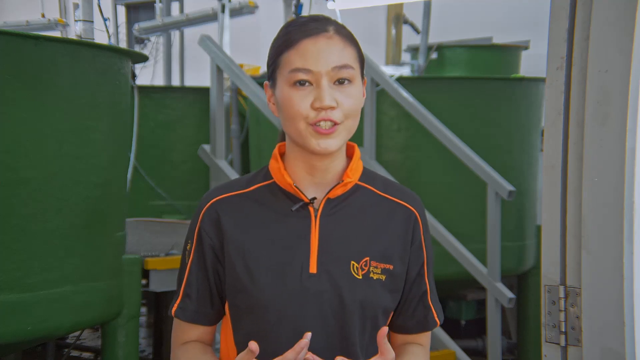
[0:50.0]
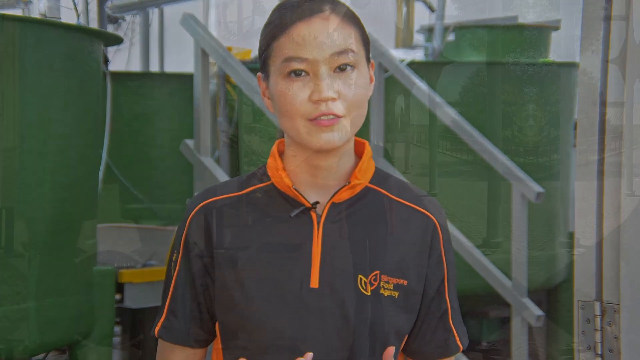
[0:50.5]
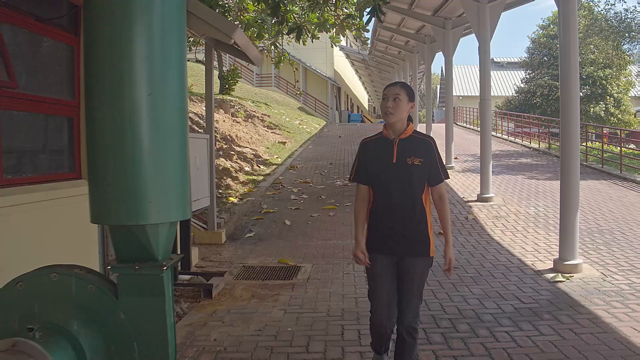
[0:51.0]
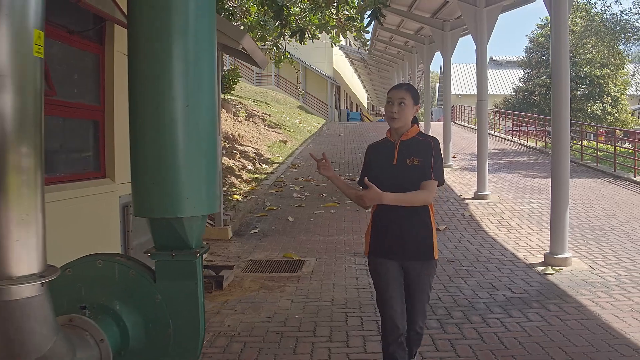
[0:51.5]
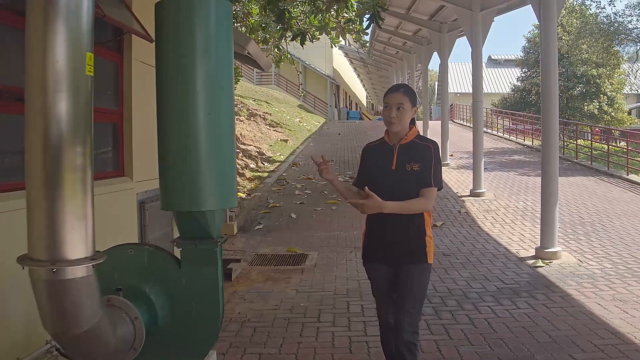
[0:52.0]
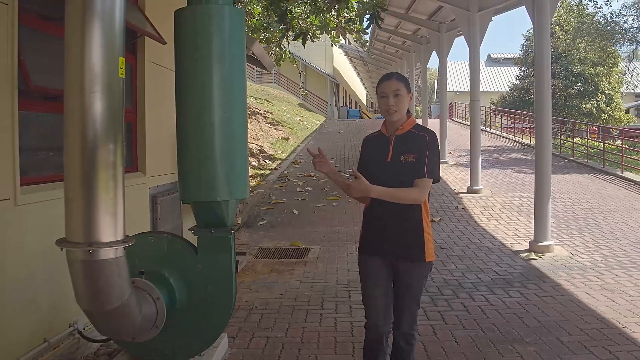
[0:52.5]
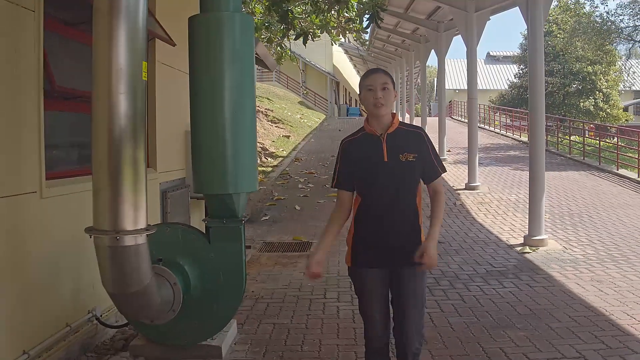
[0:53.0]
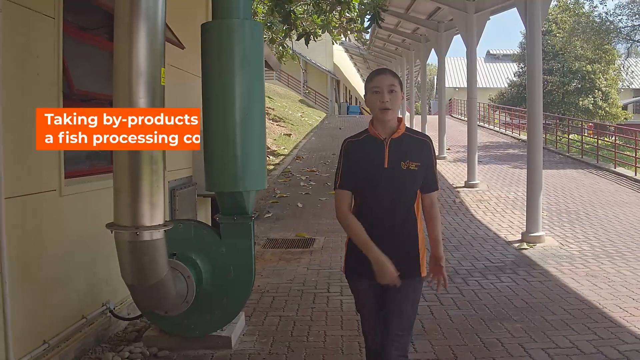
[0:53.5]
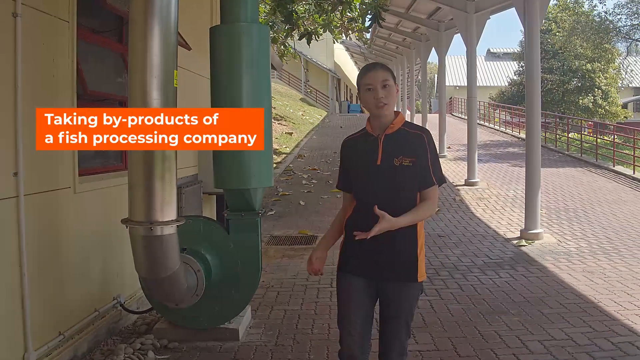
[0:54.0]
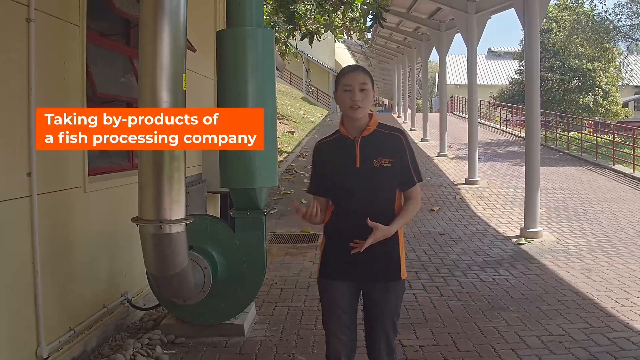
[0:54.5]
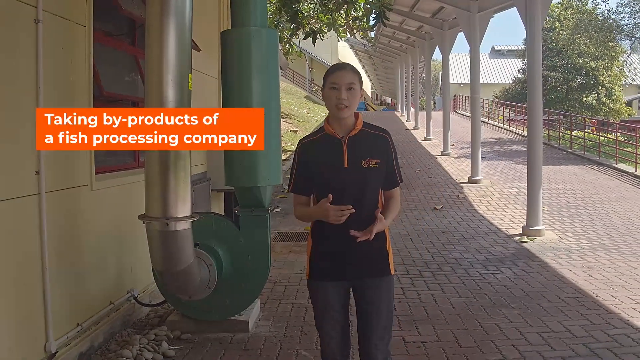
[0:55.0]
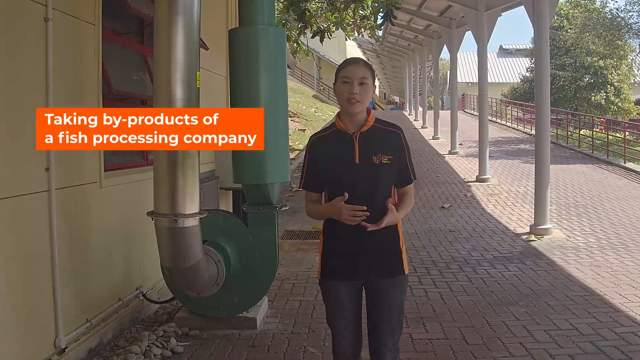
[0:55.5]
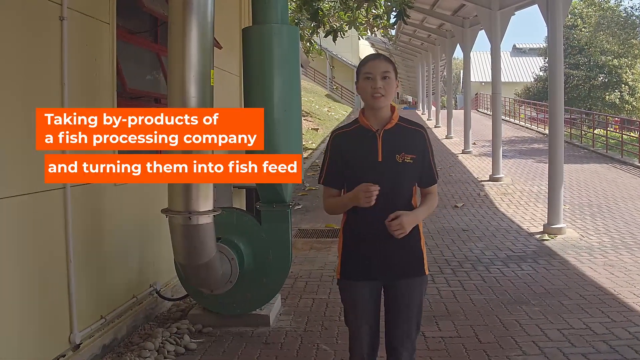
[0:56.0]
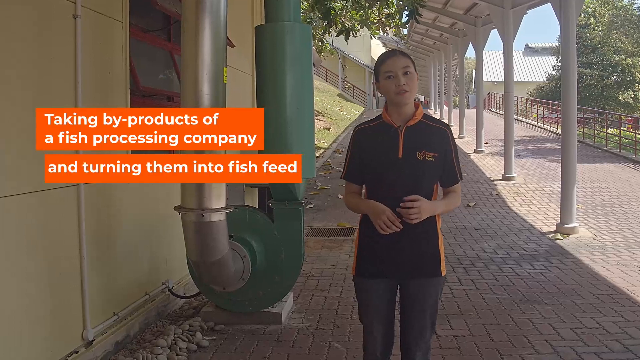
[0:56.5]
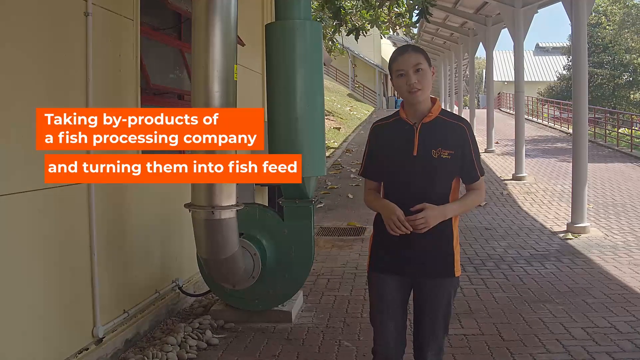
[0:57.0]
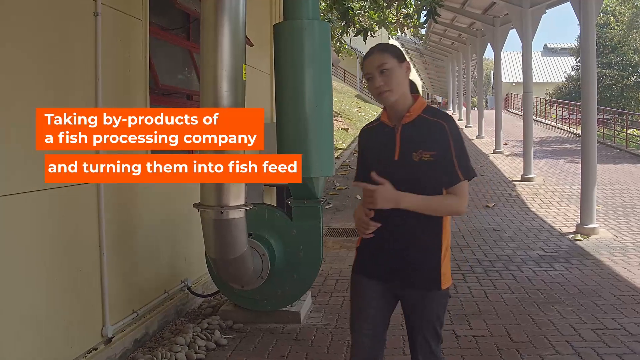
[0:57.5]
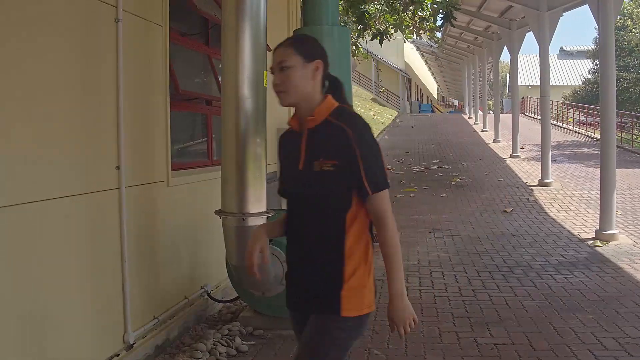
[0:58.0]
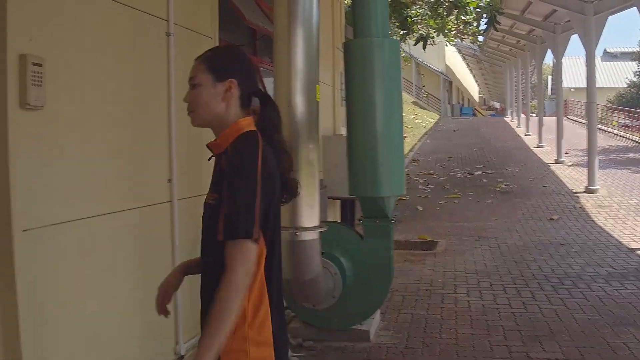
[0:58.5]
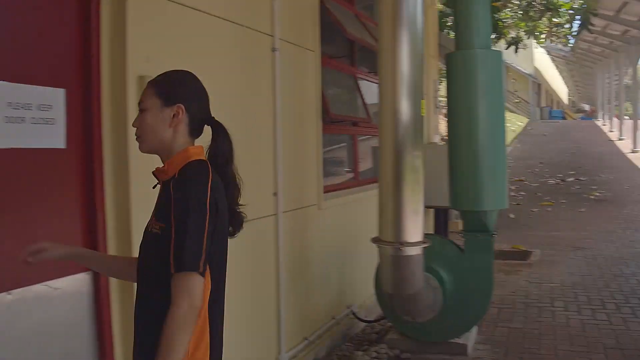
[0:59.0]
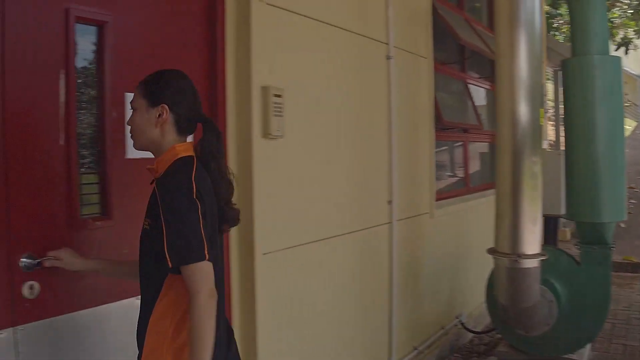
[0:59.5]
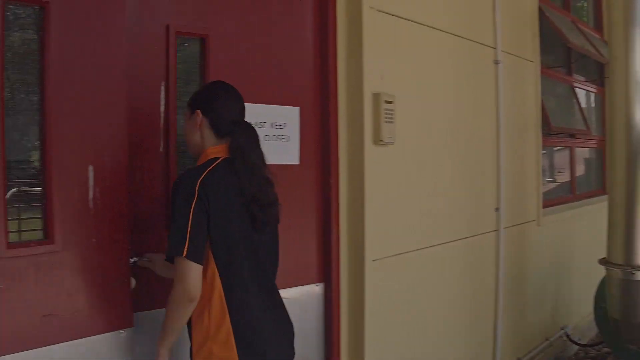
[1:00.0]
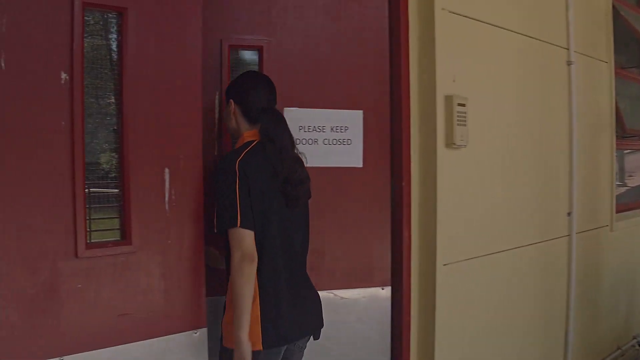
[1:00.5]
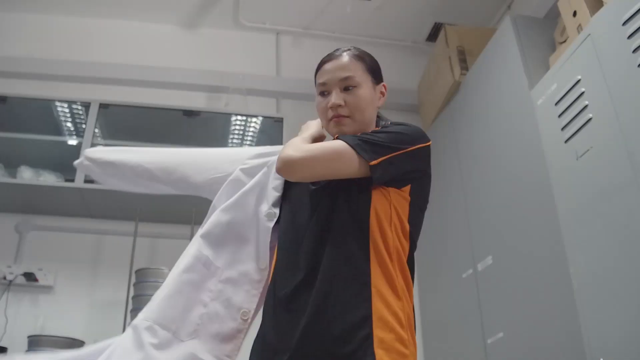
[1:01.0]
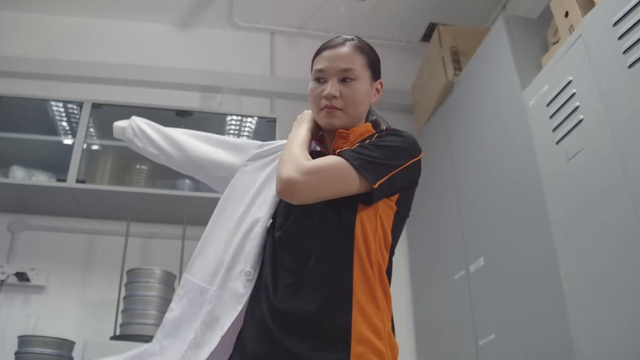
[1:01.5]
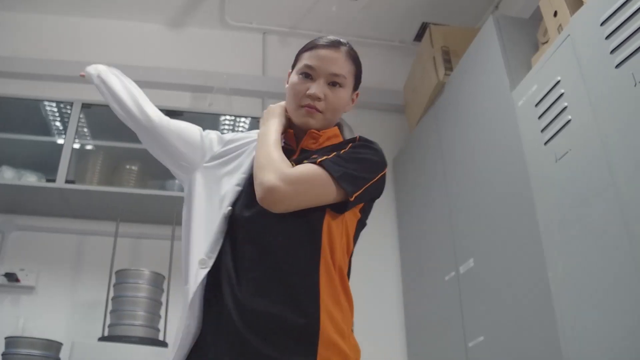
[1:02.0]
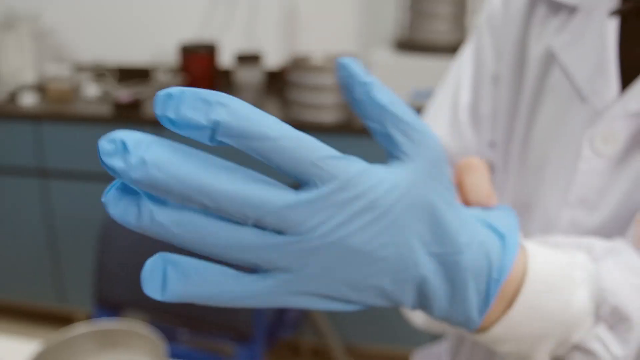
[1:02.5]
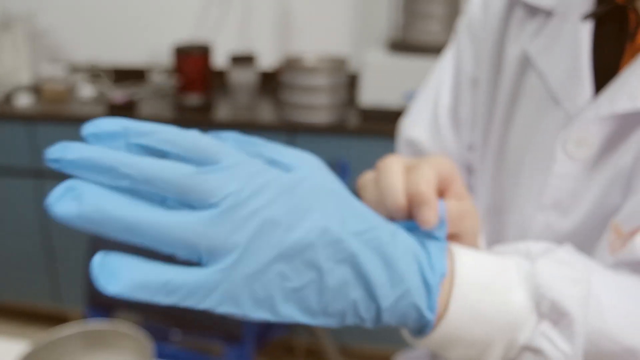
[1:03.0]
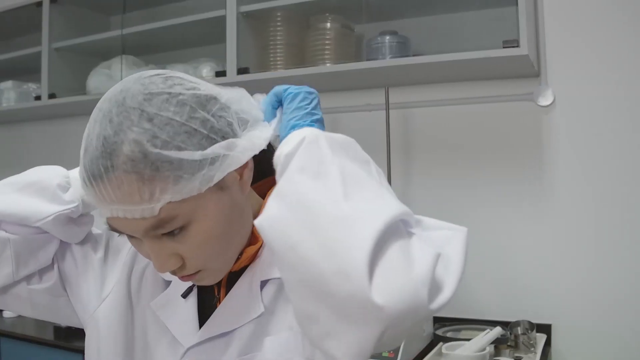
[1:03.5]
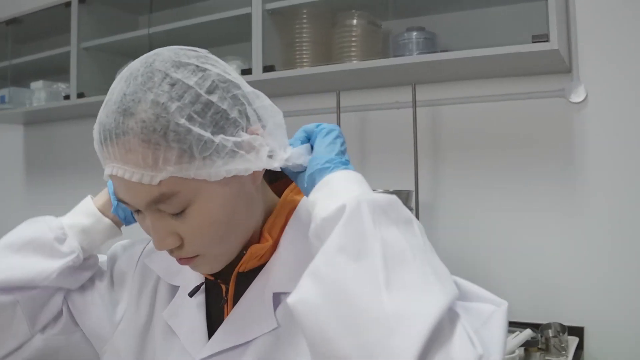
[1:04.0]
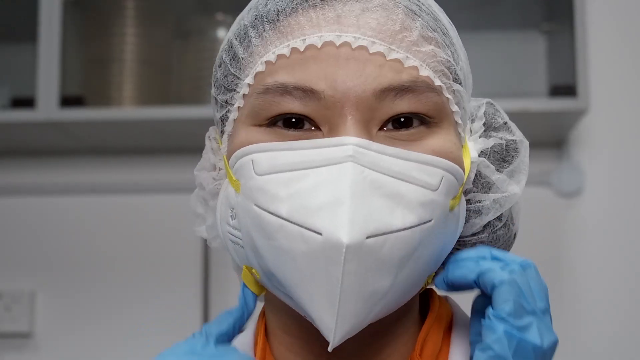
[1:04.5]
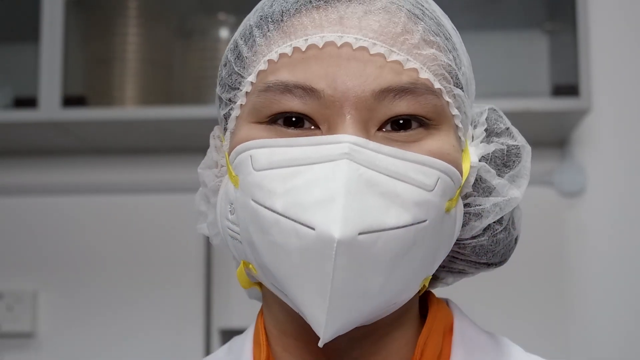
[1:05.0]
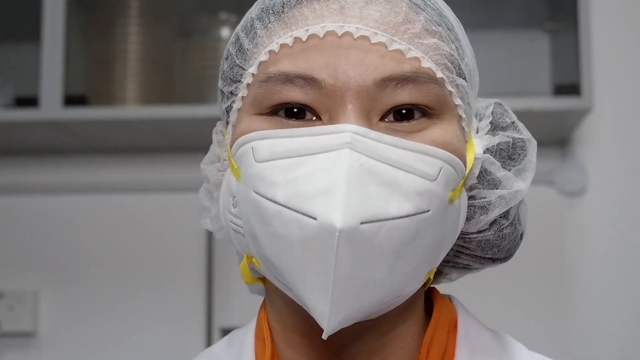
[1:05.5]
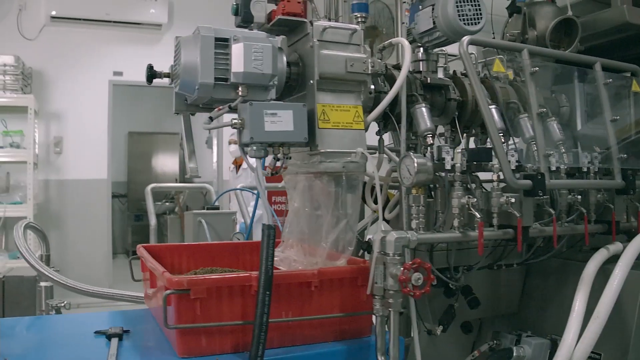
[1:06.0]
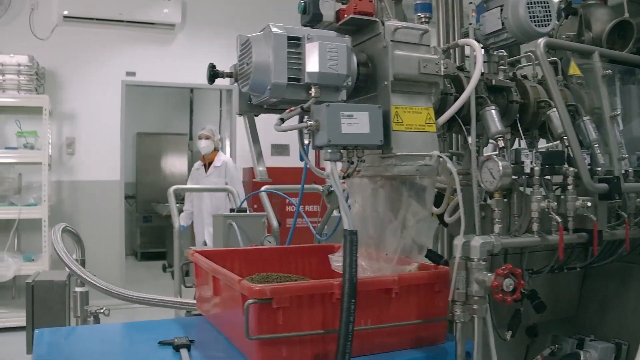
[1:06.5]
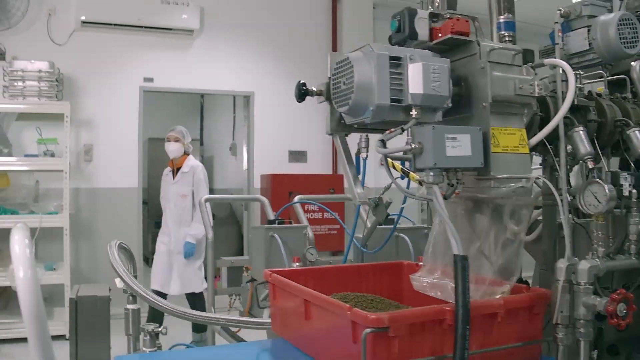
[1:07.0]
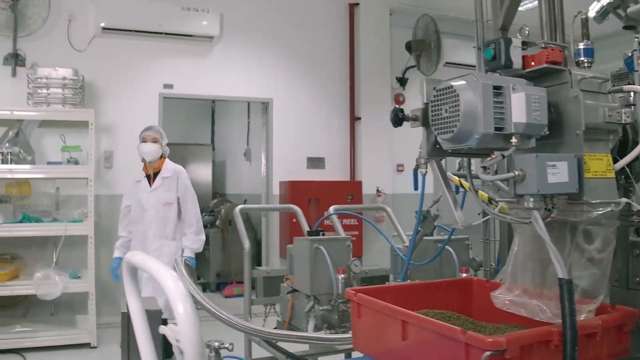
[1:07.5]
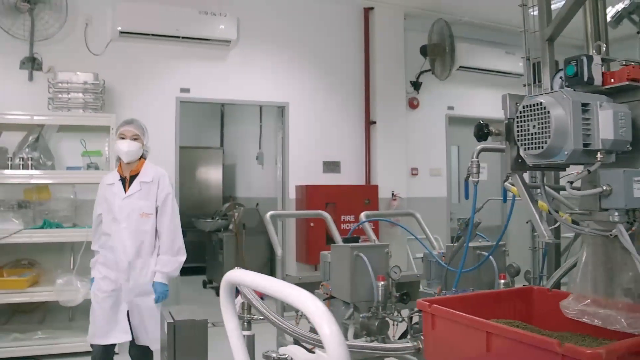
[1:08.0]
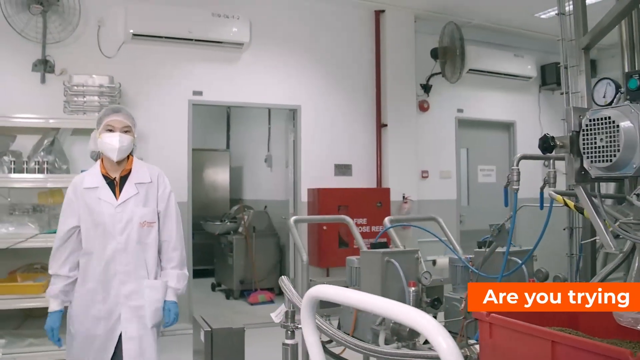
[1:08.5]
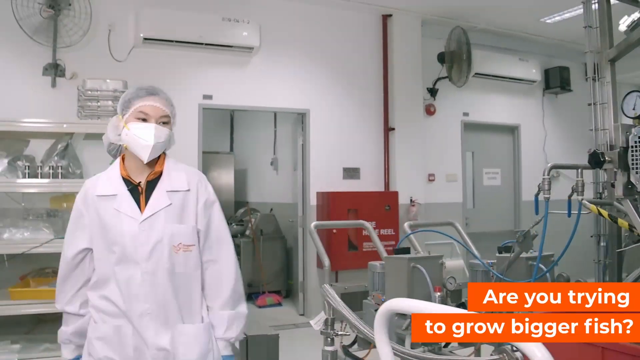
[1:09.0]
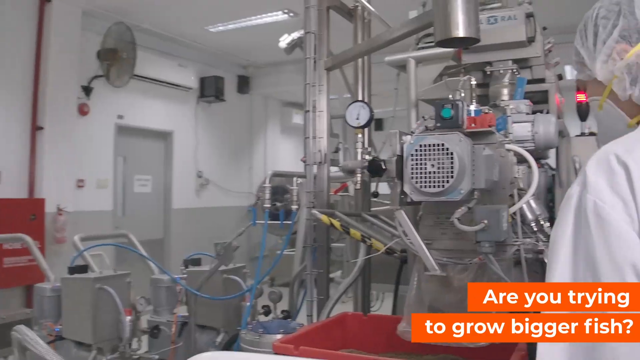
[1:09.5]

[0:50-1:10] The woman is back outside on what appears to be a bright, sunny day. She walks down a cobblestone walkway in the breezeway area of the building, smiling and talking to her audience, though she looks as if she is talking about something very serious and close to her heart. Words pop up on screen: "taking byproducts of fish processing company and turning them into fish feed". She stops for a moment for emphasis, continues speaking, then walks forward and steps through a door into the building. She puts a protective covering over her head, a face mask, and a white lab coat, and wears blue nitrile gloves. She walks across the lab, comes back to the front of the frame, and prepares to work inside the laboratory.